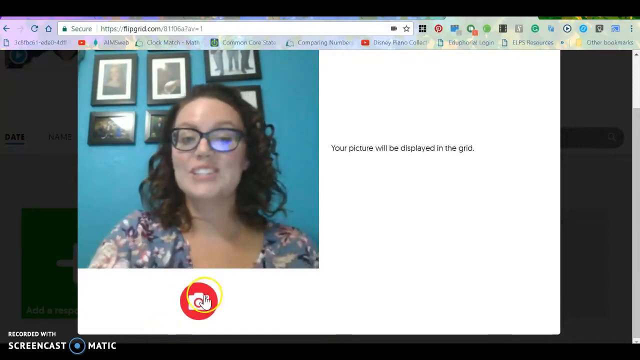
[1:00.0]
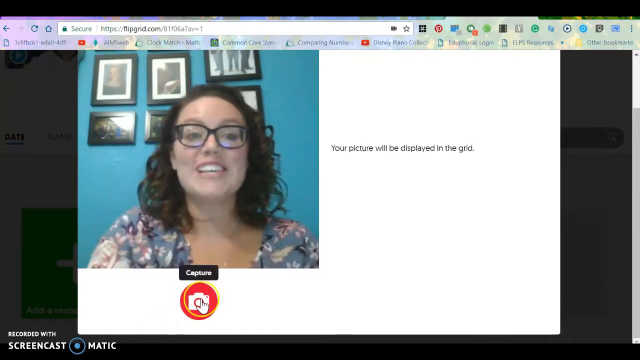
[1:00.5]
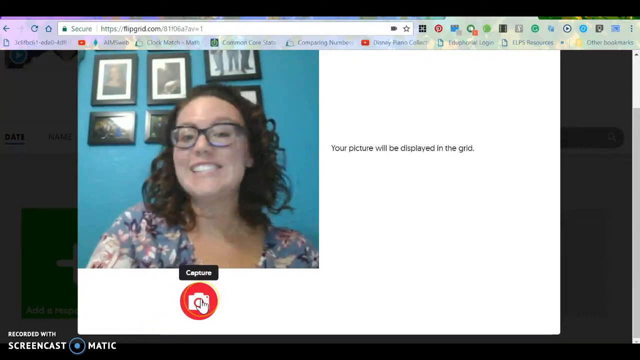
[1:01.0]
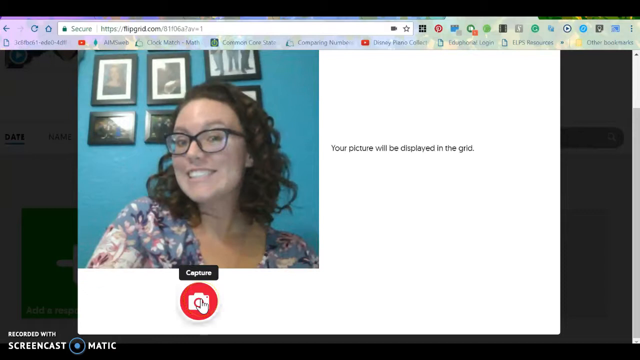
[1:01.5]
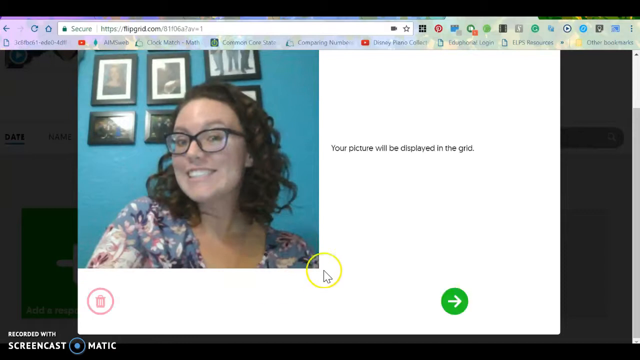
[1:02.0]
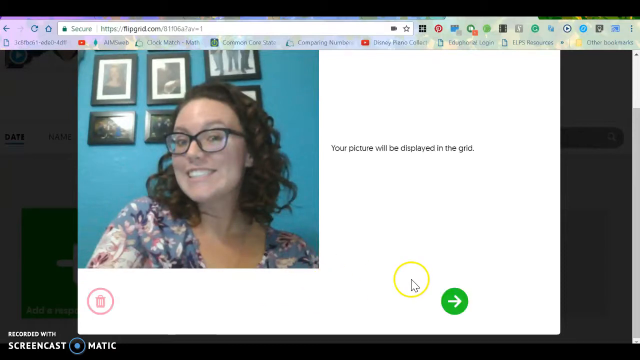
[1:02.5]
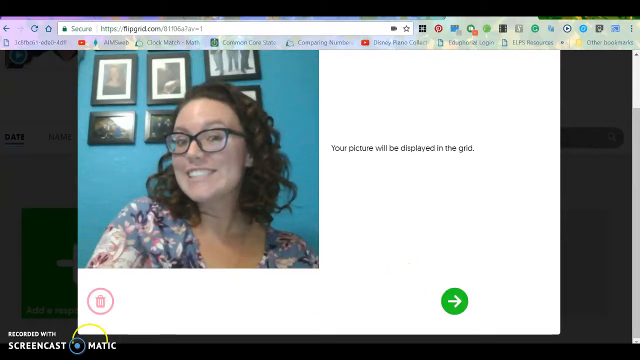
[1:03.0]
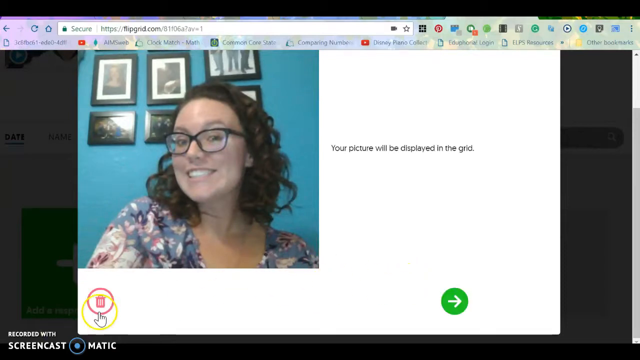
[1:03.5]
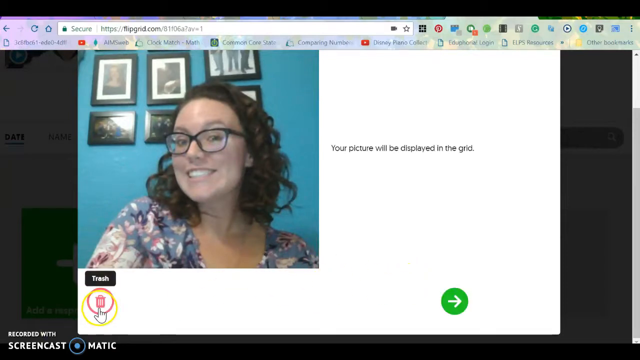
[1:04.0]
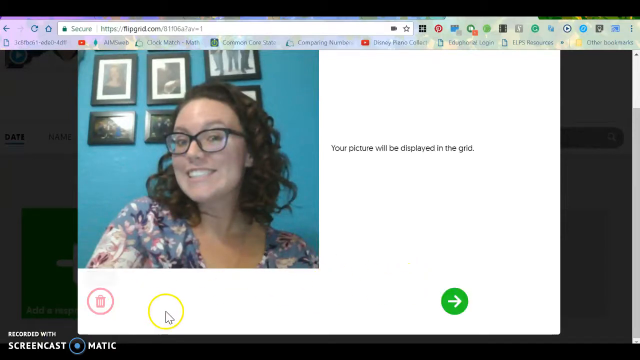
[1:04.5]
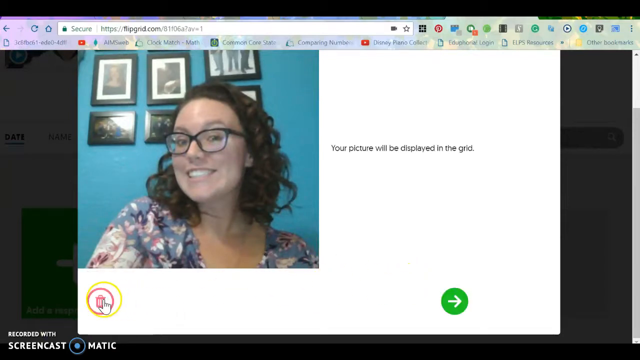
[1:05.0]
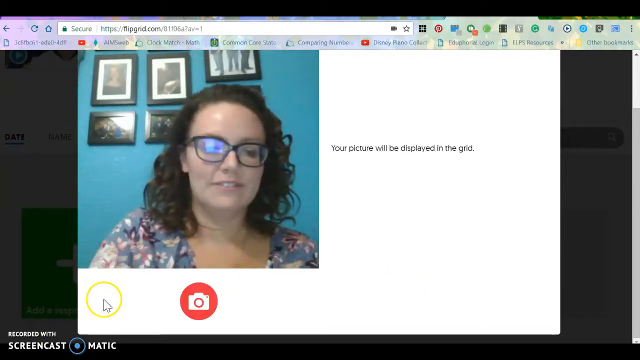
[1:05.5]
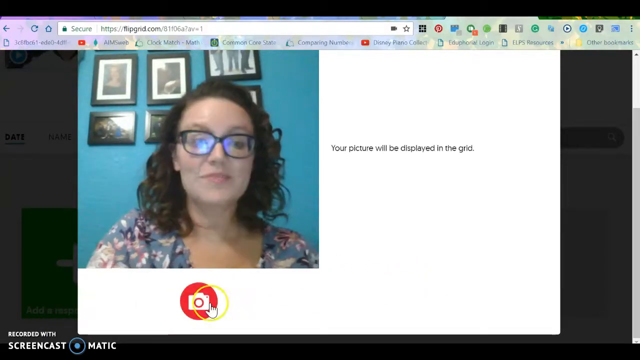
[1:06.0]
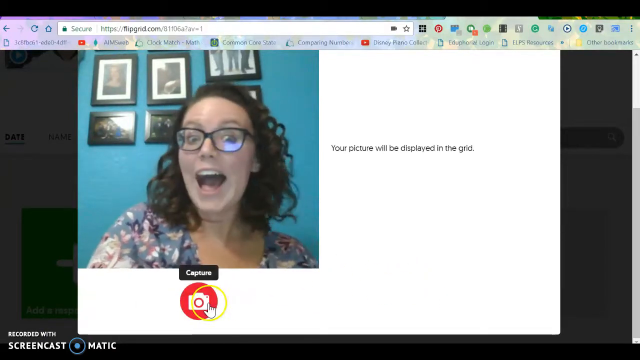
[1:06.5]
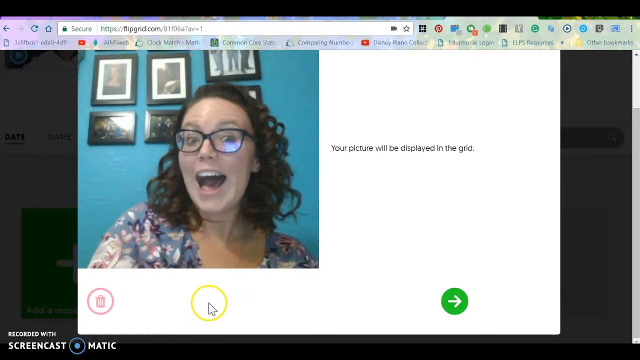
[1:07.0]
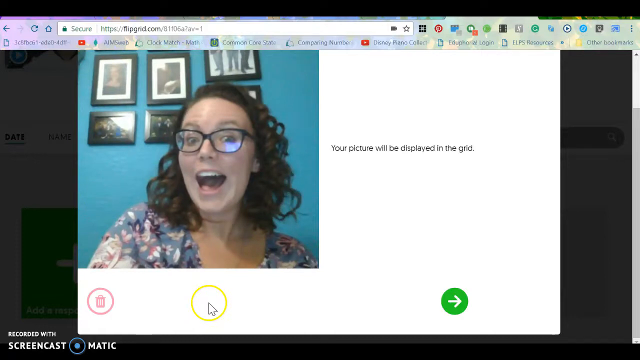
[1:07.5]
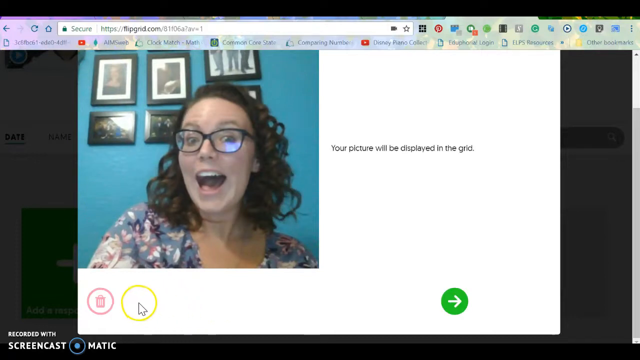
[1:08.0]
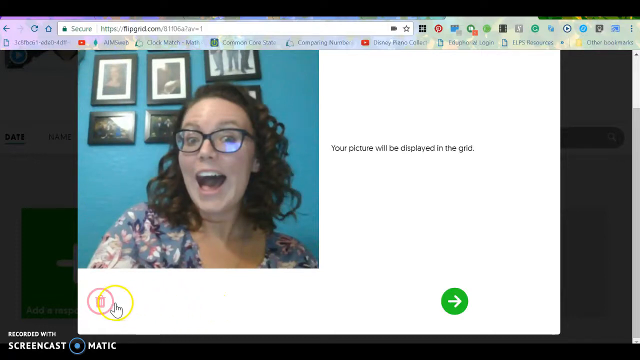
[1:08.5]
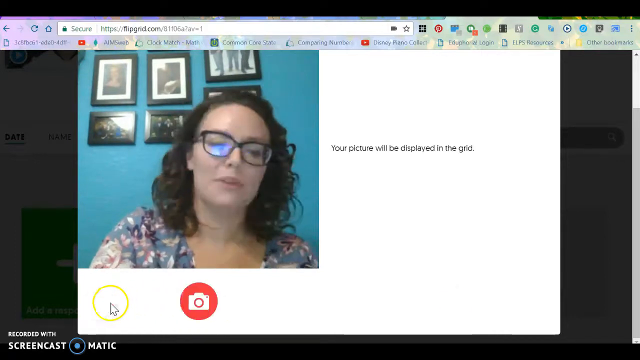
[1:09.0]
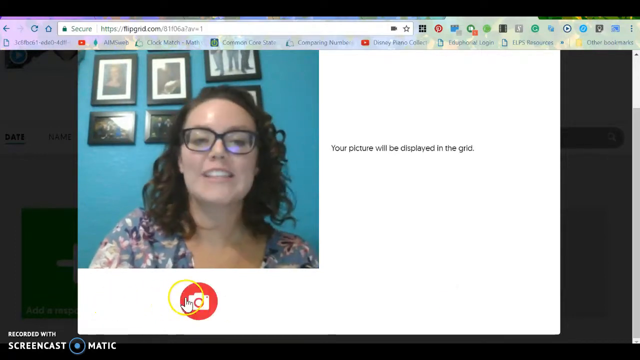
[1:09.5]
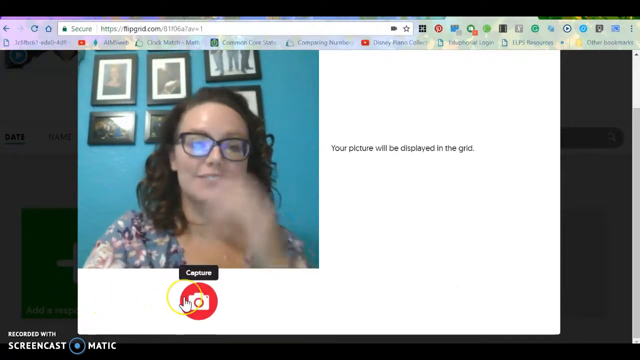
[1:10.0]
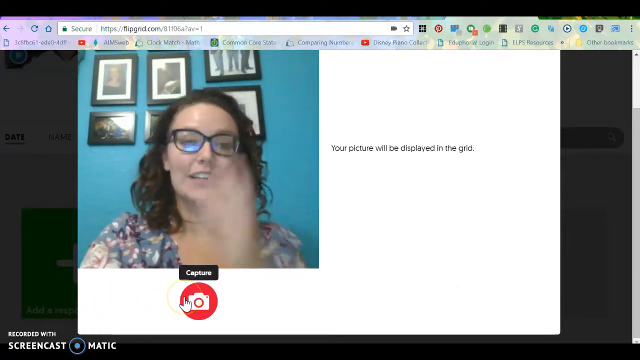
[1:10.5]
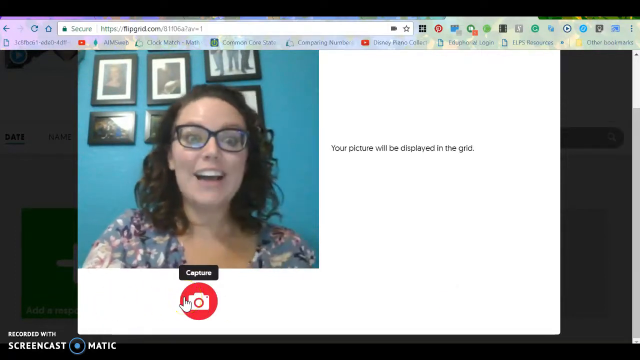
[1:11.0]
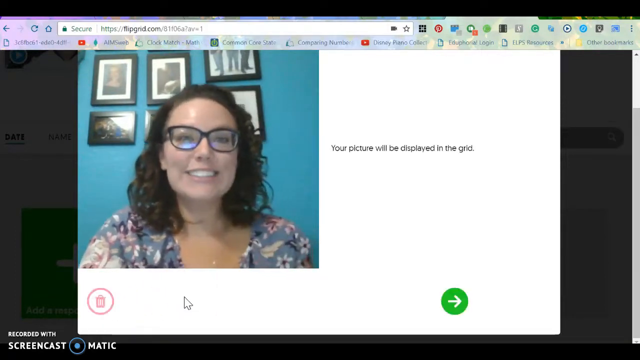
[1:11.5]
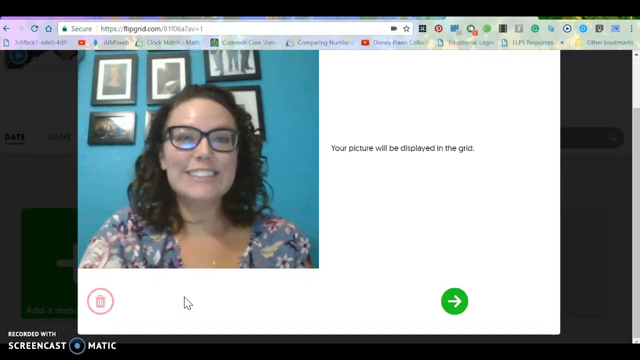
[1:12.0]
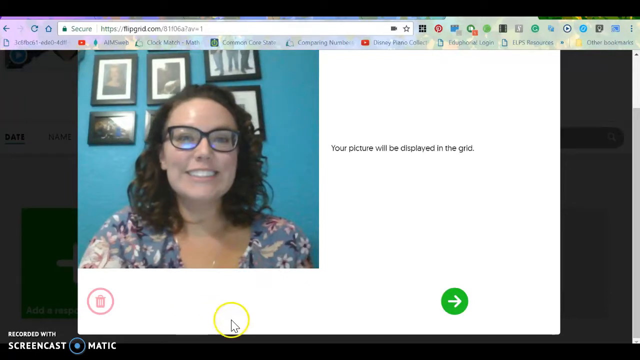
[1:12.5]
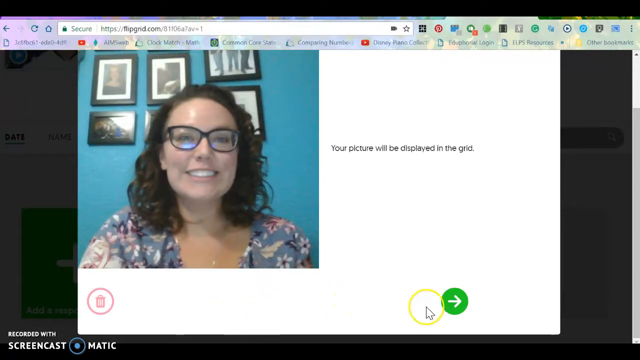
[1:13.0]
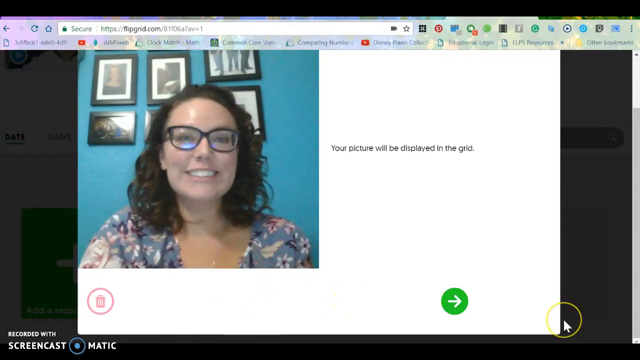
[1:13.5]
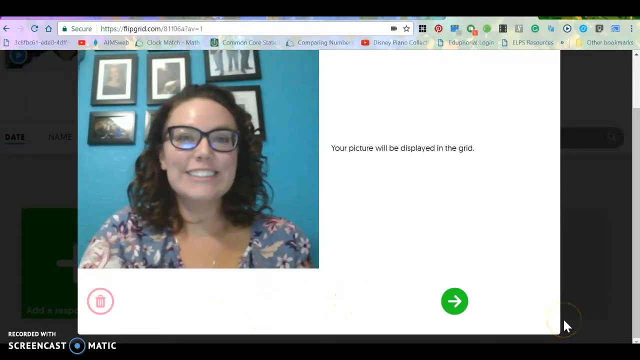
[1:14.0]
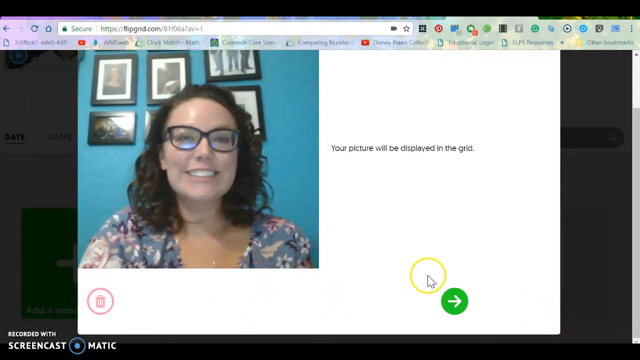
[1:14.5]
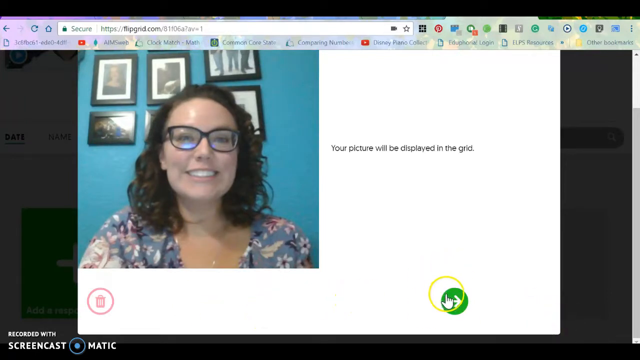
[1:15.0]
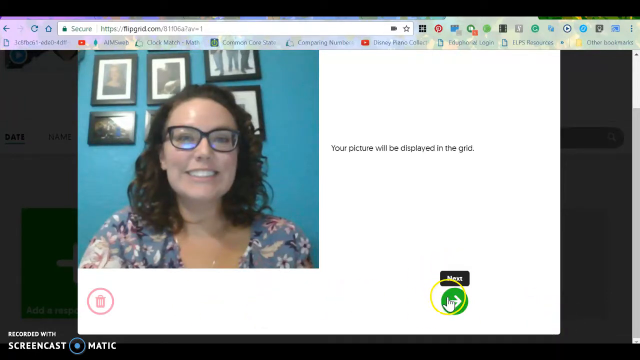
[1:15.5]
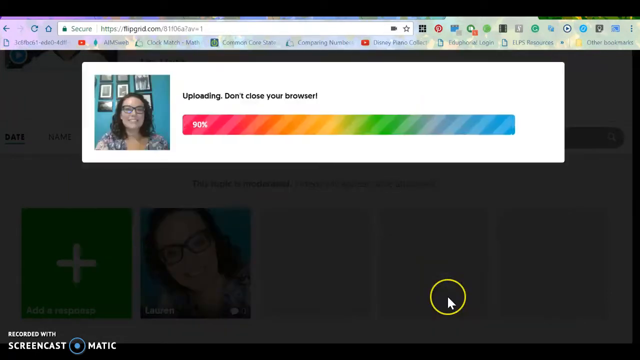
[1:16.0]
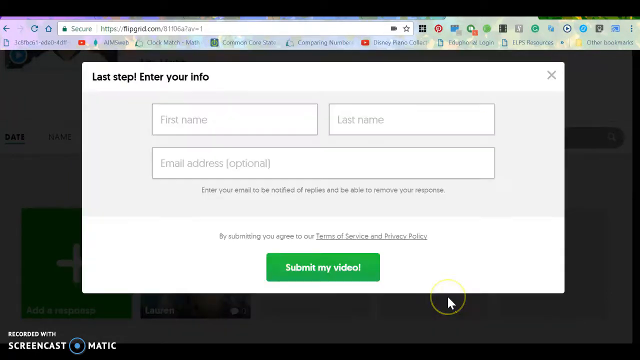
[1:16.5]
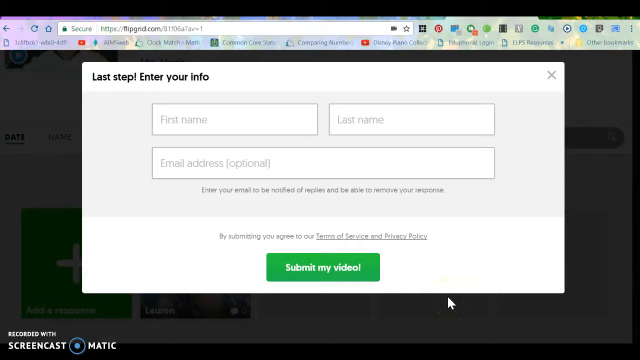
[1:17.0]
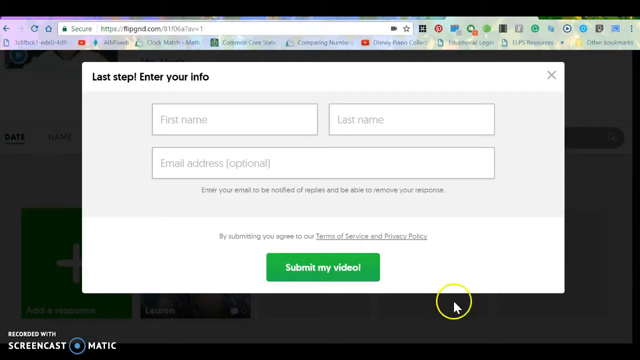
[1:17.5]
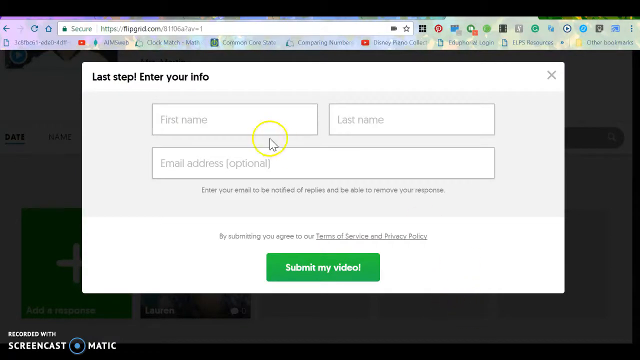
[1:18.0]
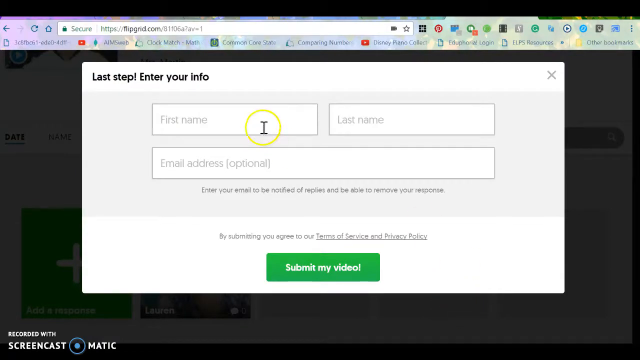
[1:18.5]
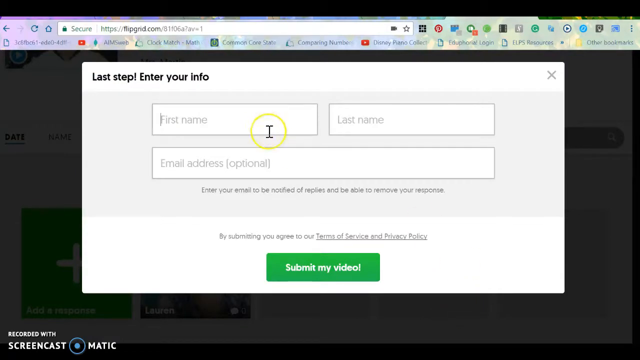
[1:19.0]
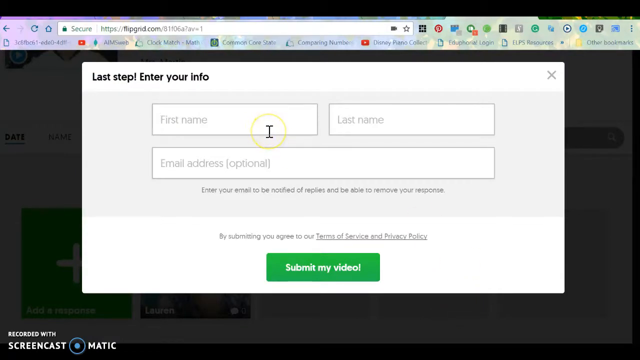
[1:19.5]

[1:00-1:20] A message next to the video of Ms. Lauren says "your picture will be displayed on the grid." The person navigating the screen presses a button with a camera icon labeled "capture." After the picture is taken, it can be deleted by pressing a dustbin icon. This is done multiple times, maybe two, and then "next step" is pressed. The last step, "enter your info," displays fields for first name, last name and email address, with the email marked optional, and then the form can be submitted. It seems to be on a laptop or desktop because of the landscape view. Text in the bottom left corner begins "recorded with screencast."